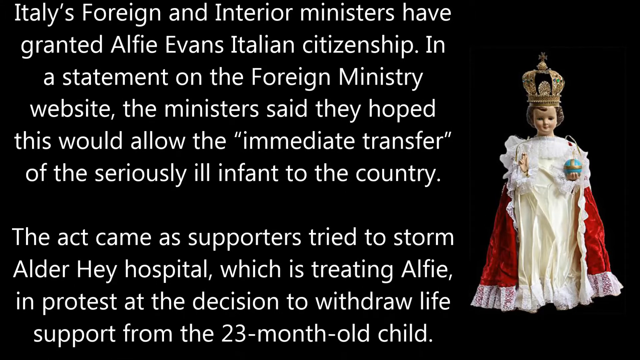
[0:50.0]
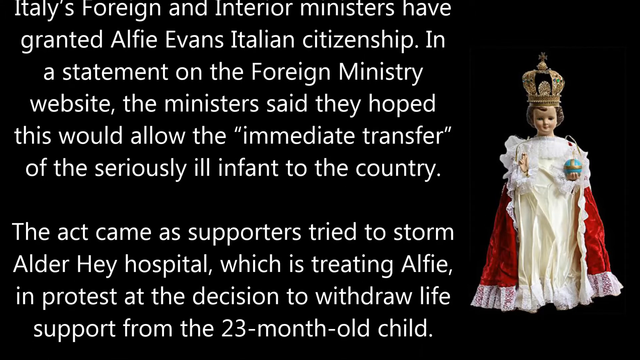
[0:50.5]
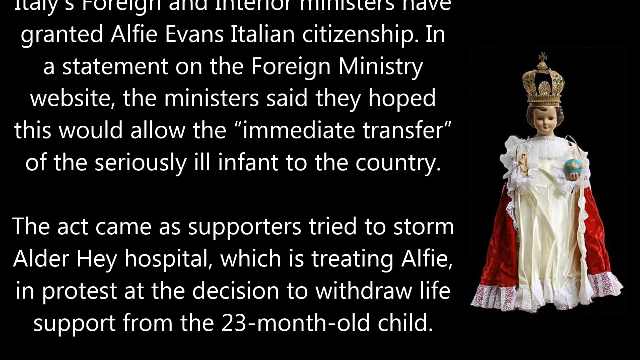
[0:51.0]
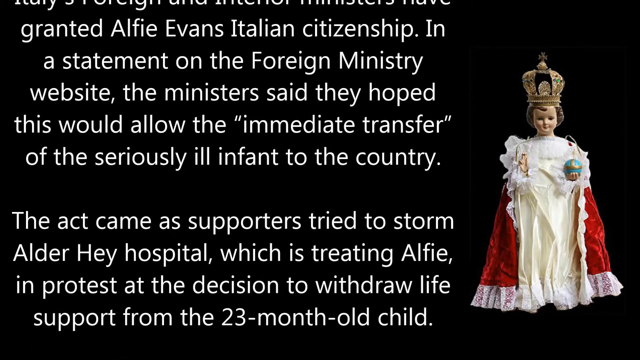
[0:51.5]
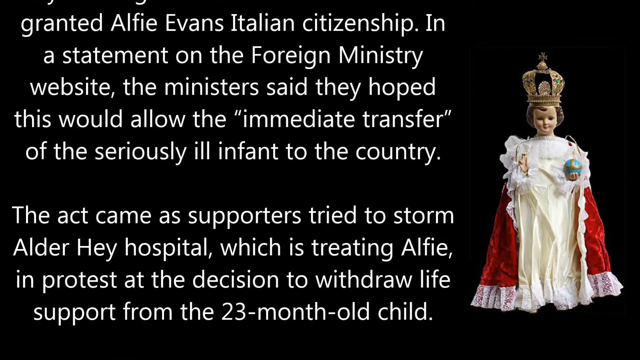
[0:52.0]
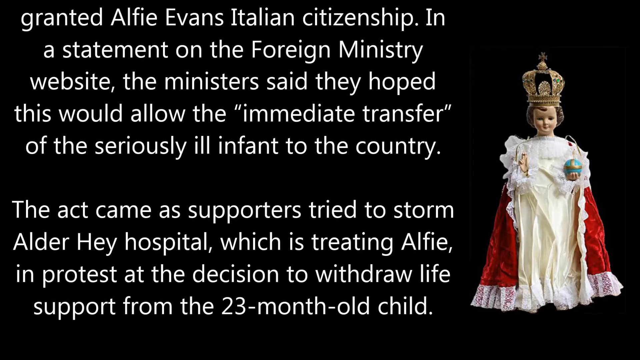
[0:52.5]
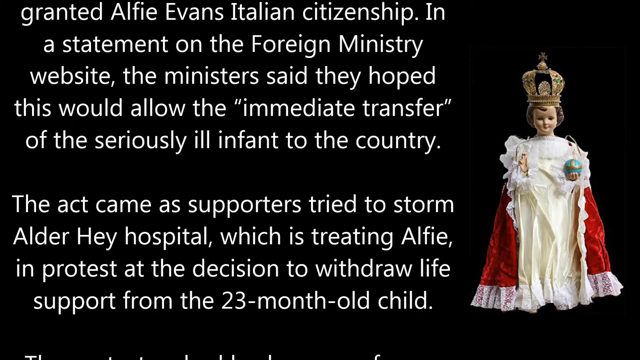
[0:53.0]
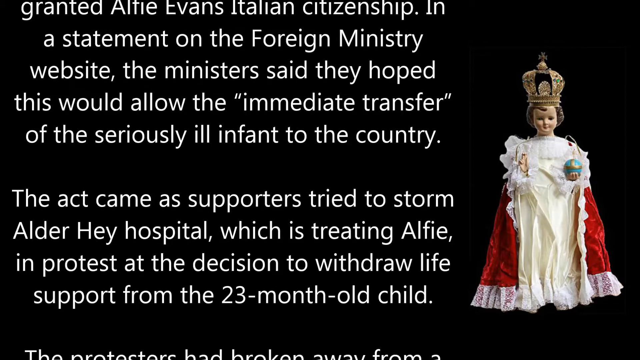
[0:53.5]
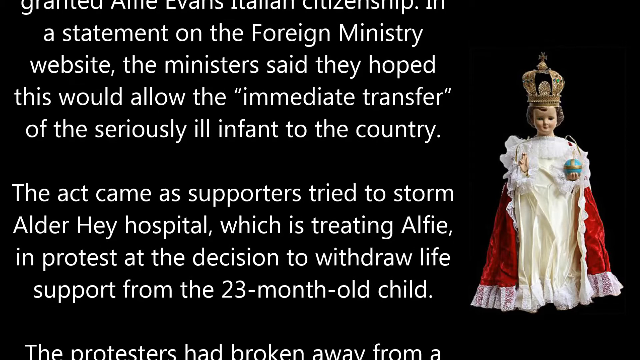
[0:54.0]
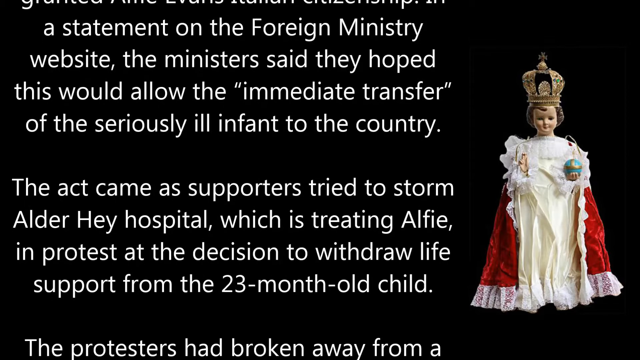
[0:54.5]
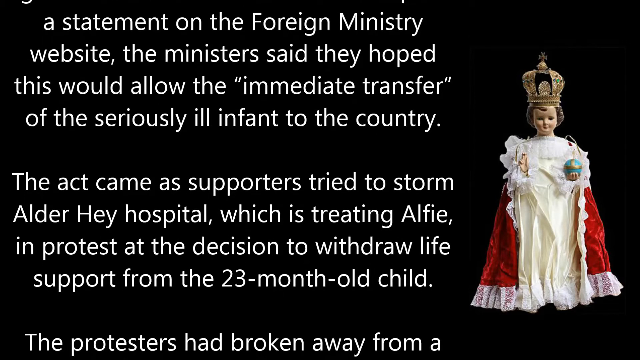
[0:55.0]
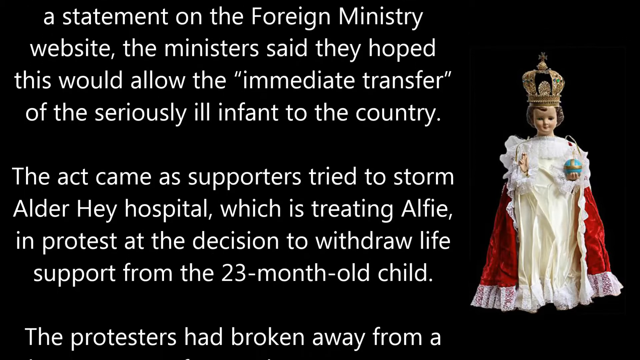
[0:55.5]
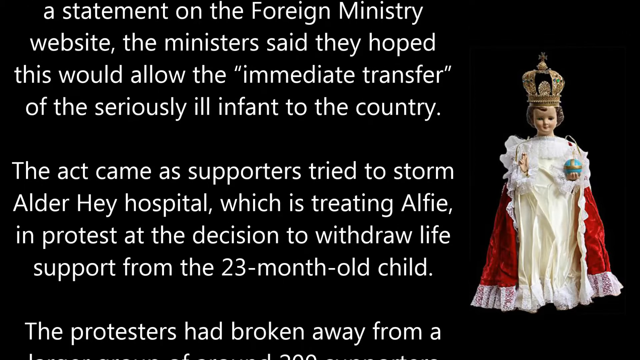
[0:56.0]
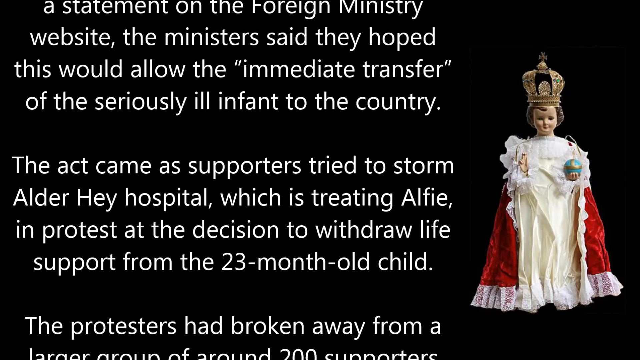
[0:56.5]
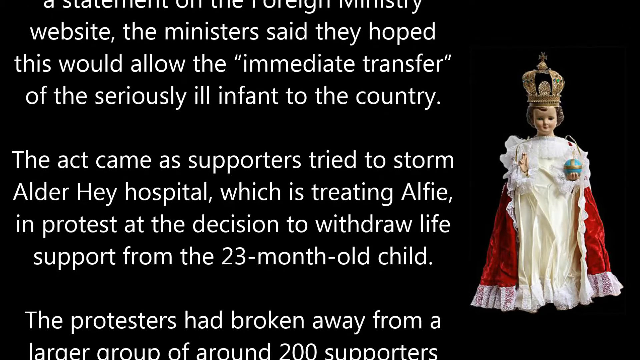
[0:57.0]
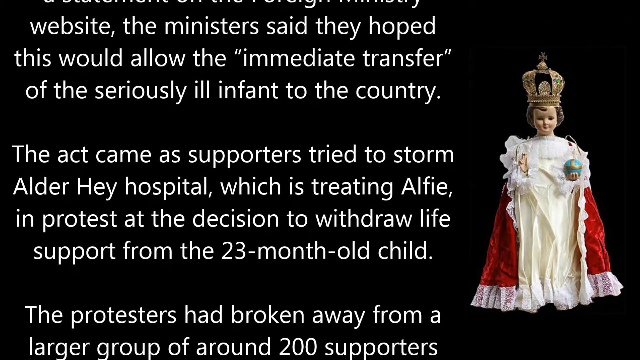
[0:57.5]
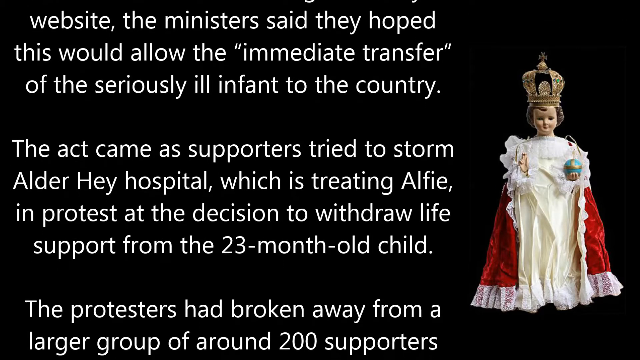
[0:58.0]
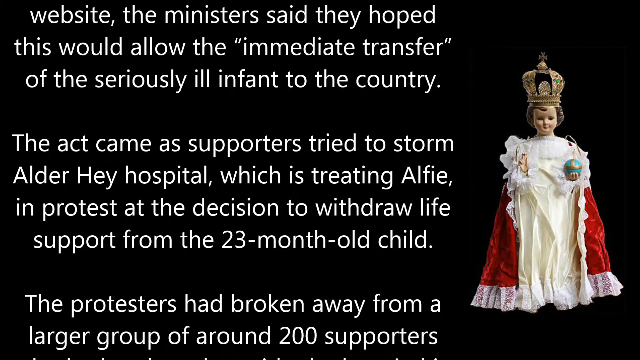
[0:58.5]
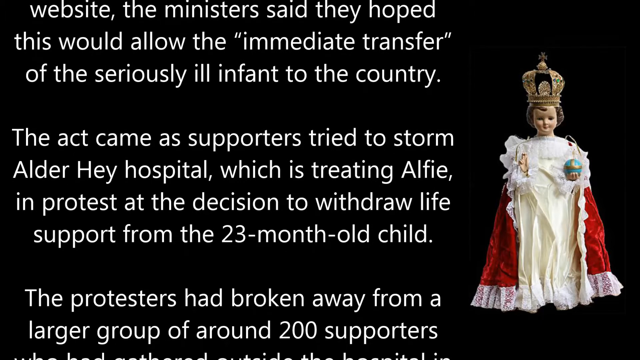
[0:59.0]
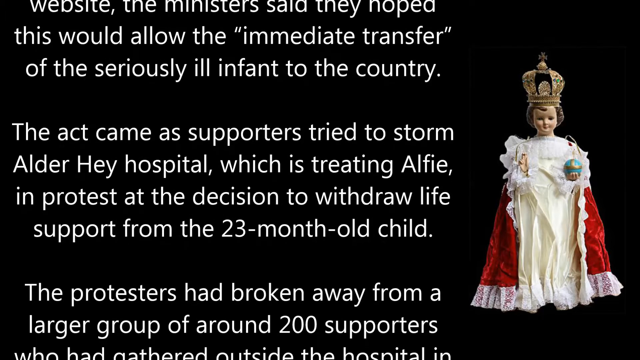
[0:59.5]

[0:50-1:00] On a black background, a doll in a king's robe or queen's dress is on the right of the screen, and white font on the black background reads "Italy's foreign and interior ministers have granted Alfie Evans Italian citizenship in a statement on the foreign ministry website. The minister said they hope this would allow immediate transfer of the seriously ill infant to the country." The font continues to scroll upward, and the next paragraph states "The act came as supporters tried to storm Alder Hey hospital which is treating Alfie in protest at the decision to withdraw life support from the 23-month-old child."